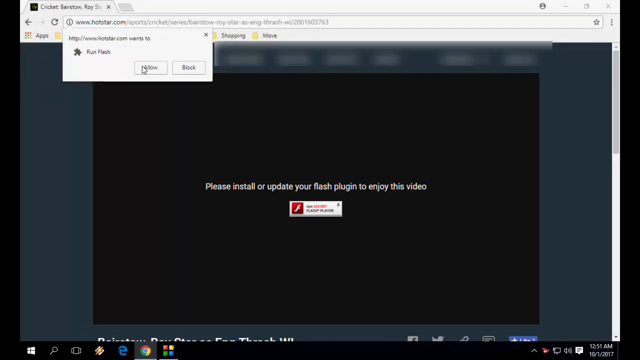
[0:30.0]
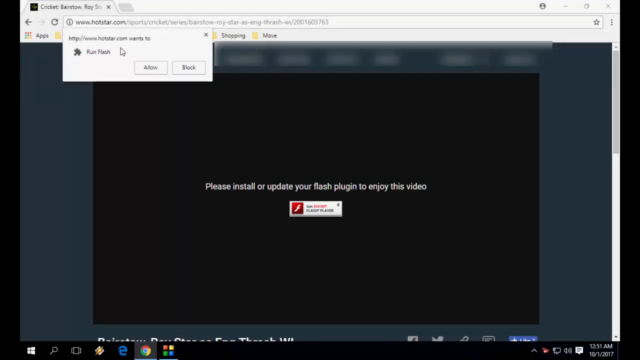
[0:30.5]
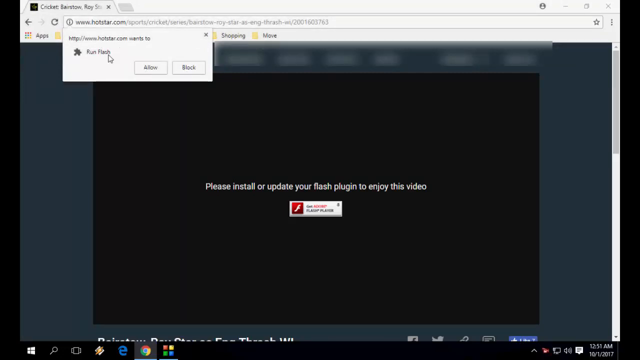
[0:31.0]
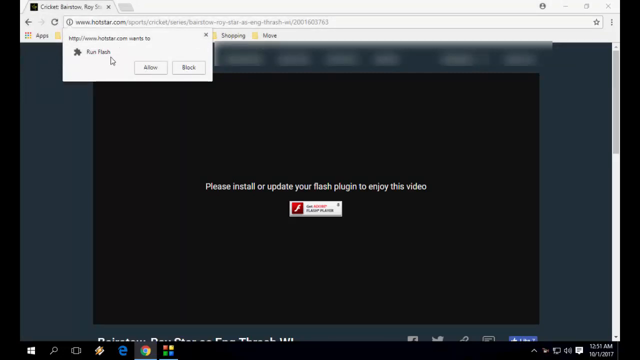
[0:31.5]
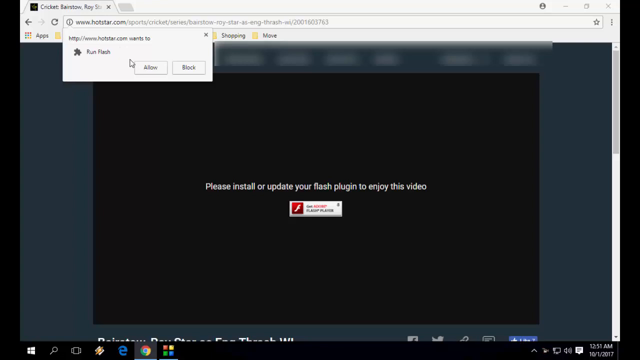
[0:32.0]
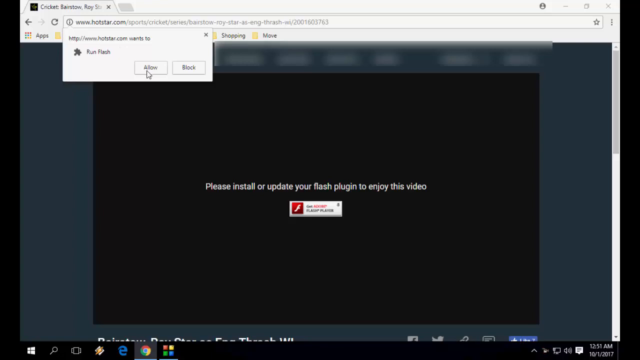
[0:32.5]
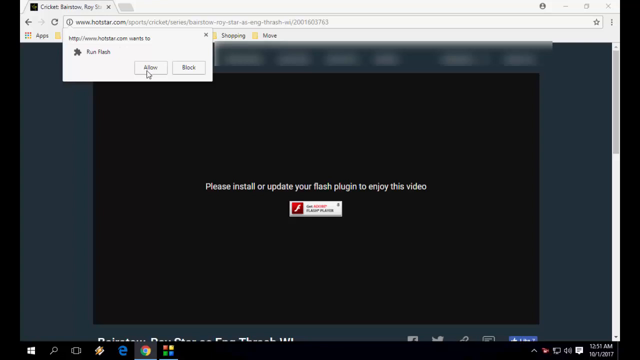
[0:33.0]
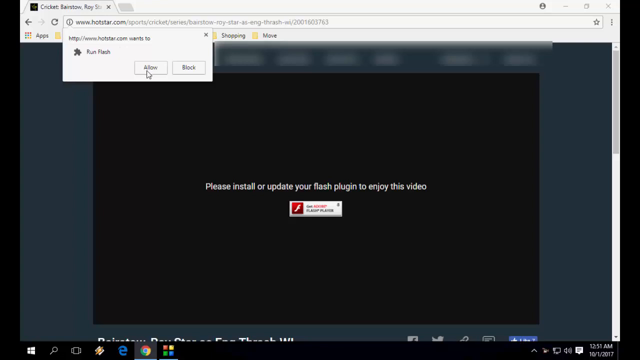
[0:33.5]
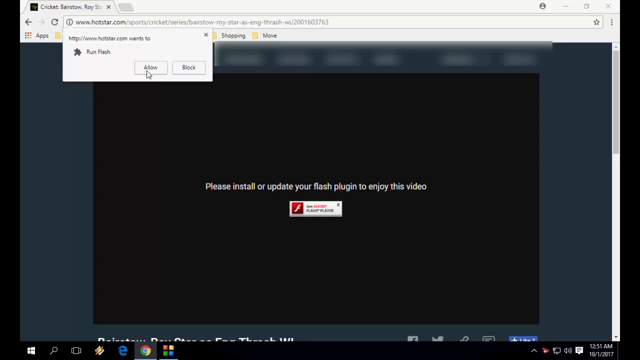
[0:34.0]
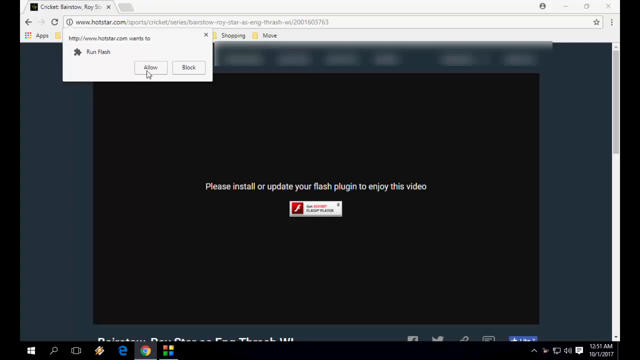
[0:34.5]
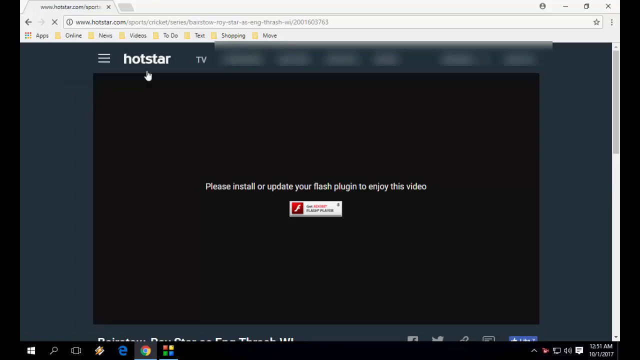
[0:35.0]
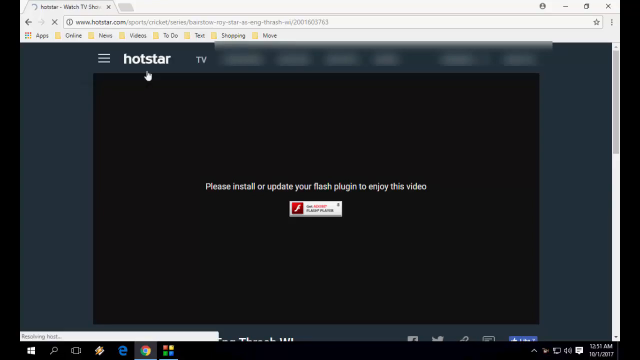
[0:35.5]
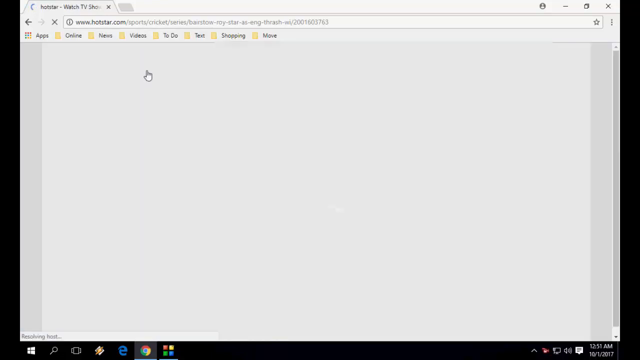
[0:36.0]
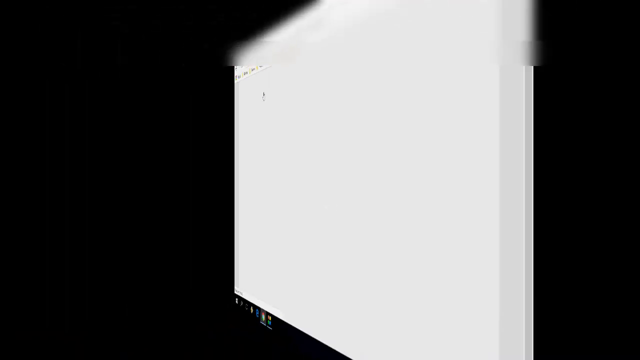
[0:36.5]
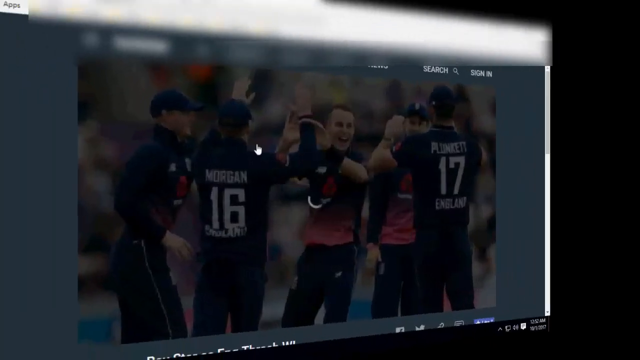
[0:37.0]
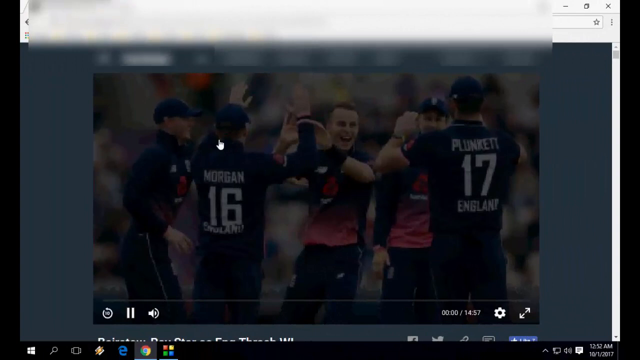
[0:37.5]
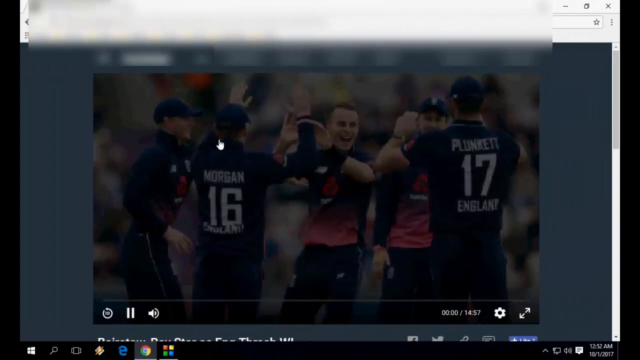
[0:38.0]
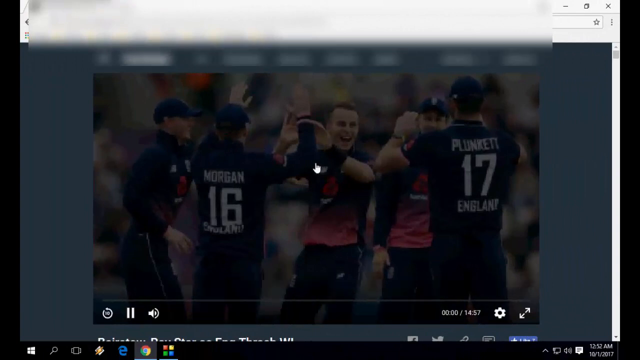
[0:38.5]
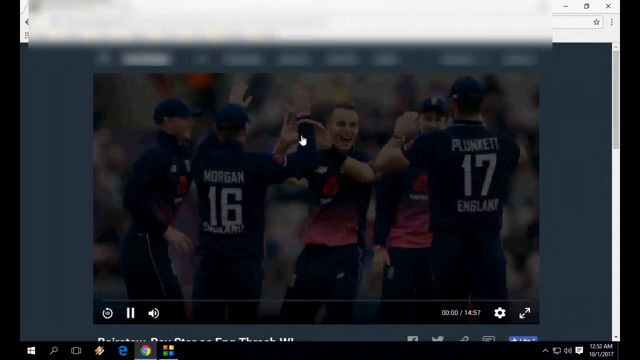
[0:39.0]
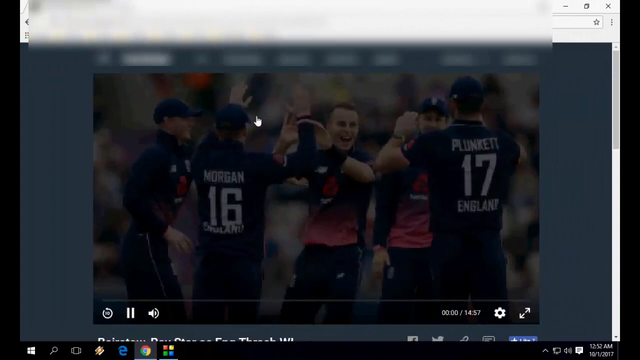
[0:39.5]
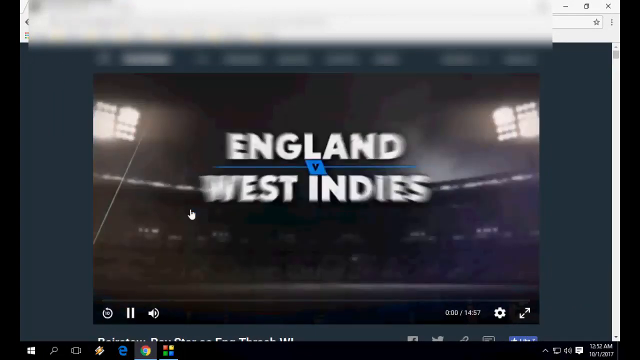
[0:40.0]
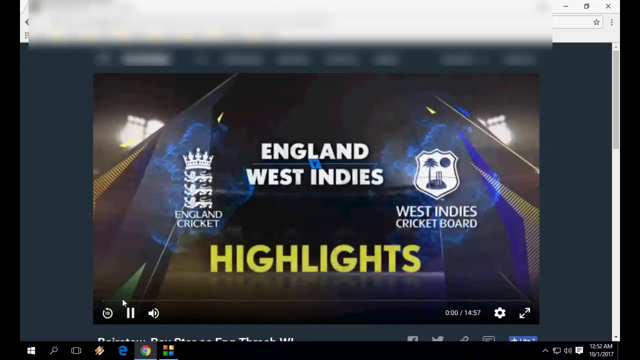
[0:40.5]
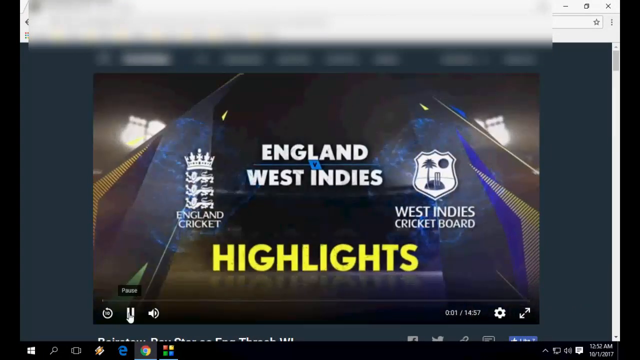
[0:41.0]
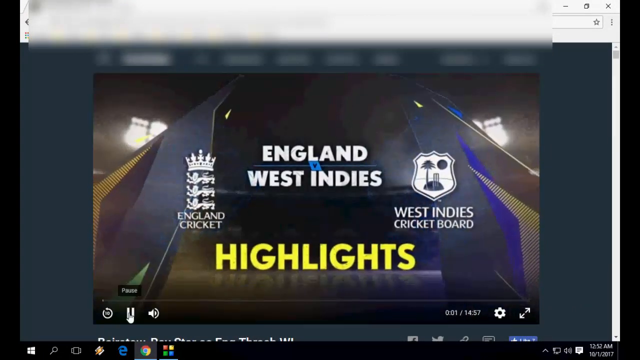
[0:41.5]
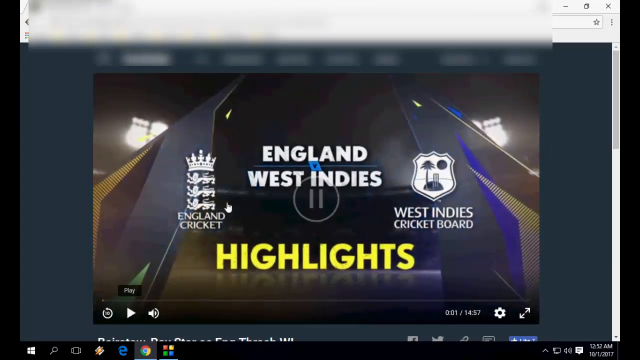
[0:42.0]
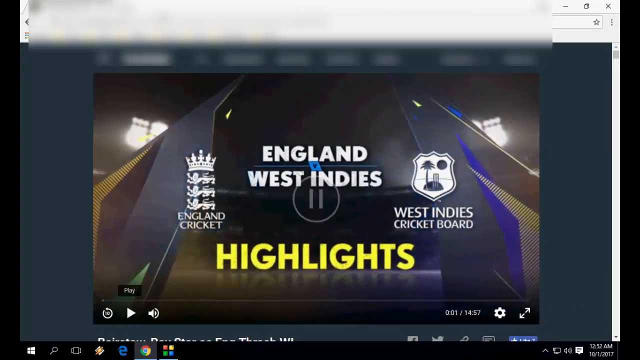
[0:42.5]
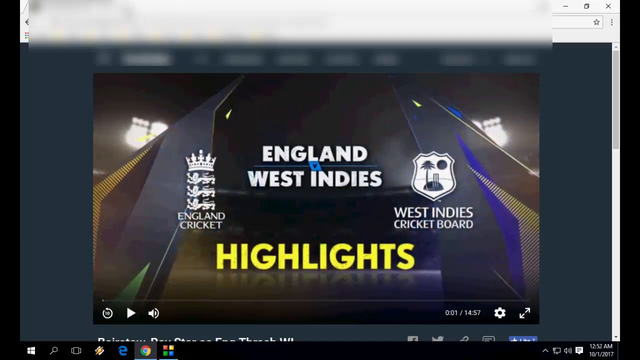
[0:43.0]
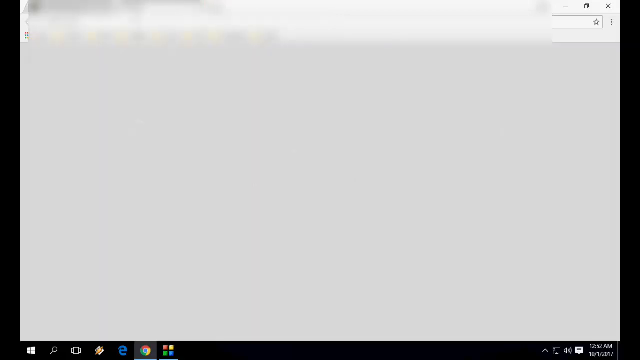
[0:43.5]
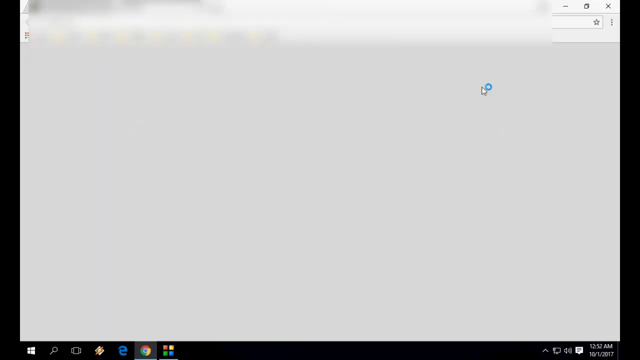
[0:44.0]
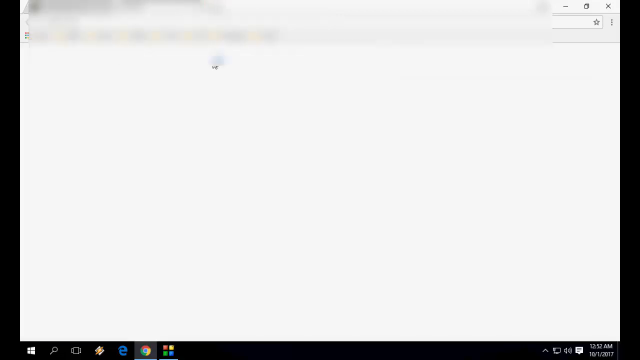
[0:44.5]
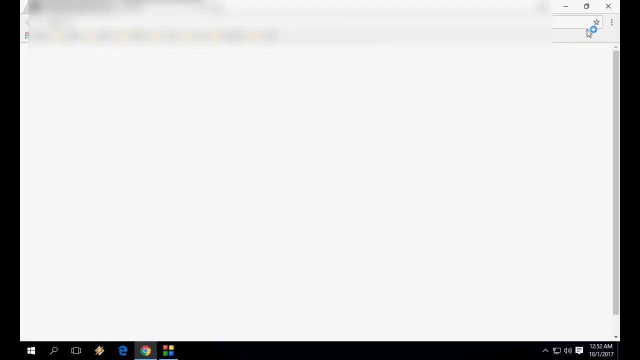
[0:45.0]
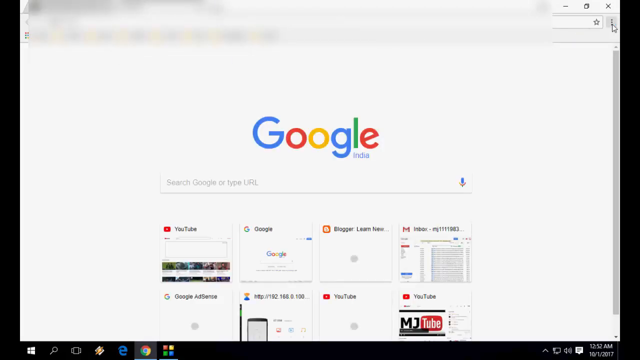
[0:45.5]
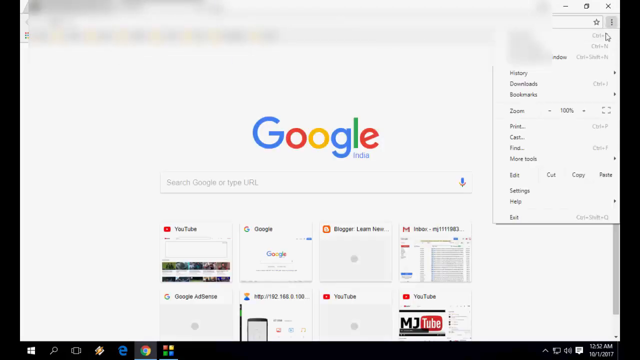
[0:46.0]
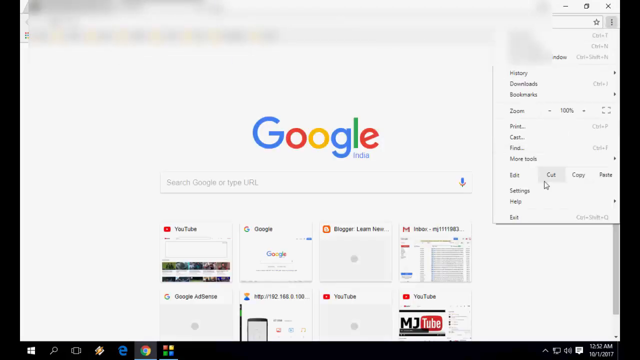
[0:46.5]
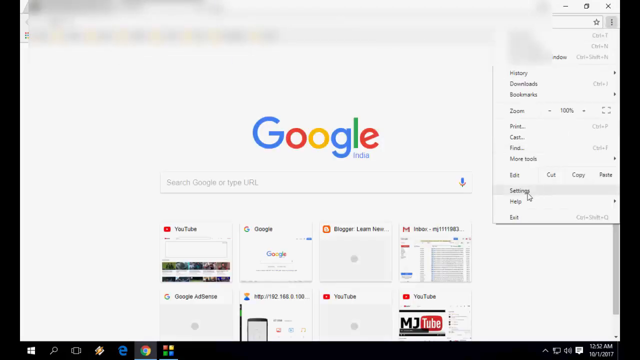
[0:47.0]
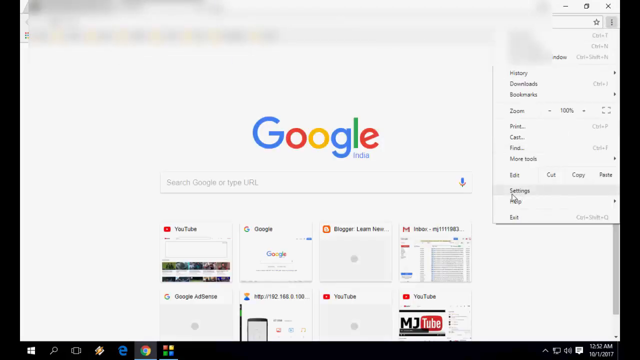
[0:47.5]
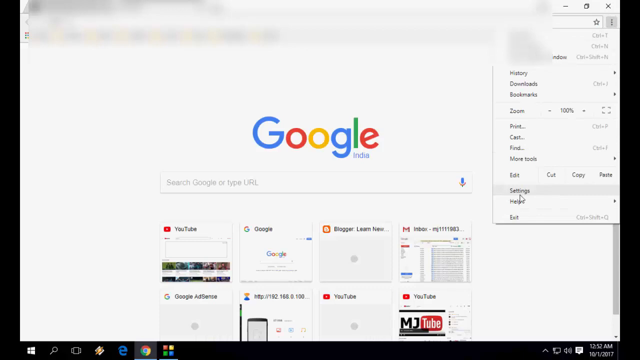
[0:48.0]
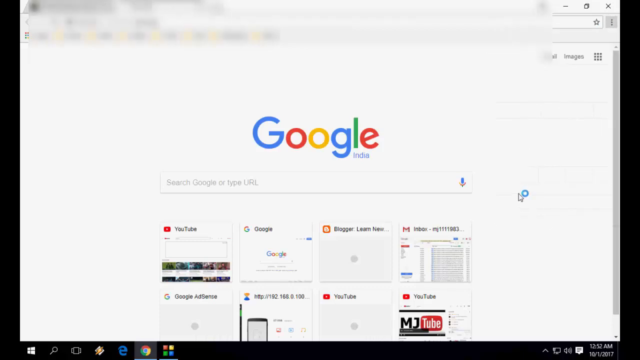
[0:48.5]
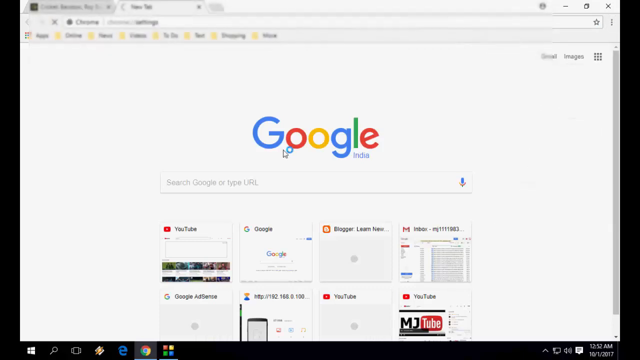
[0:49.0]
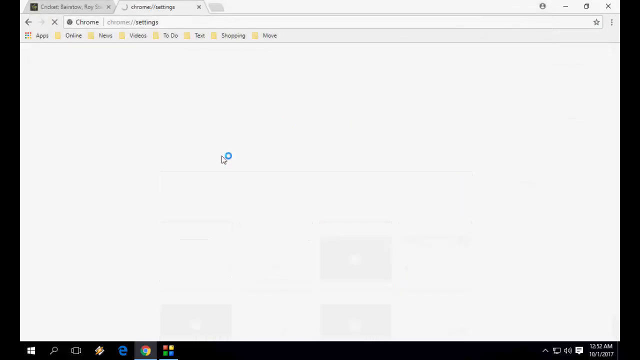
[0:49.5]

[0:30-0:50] After the plugin is allowed, a video plays in a web-based video player. The tutorial also shows the route through the settings in Chrome. What looks like the Adobe icon is on the page, where it is clicked and allowed so the video is shown. The details and text are very clear.